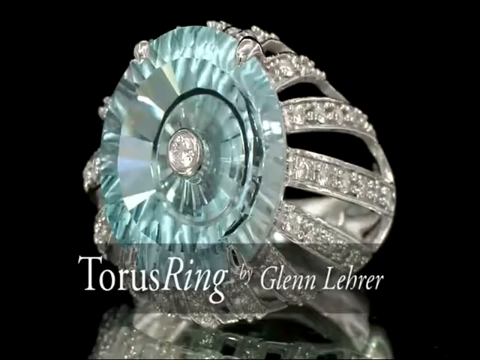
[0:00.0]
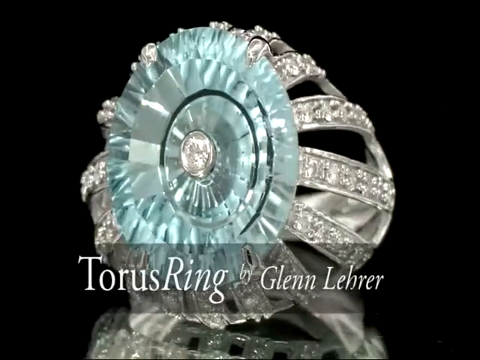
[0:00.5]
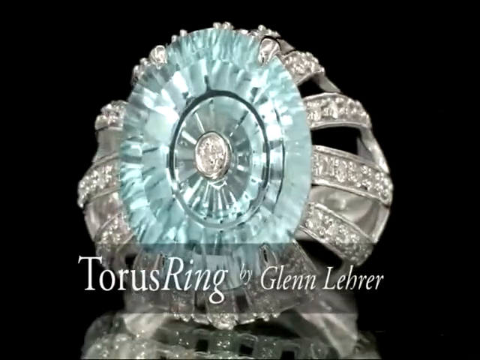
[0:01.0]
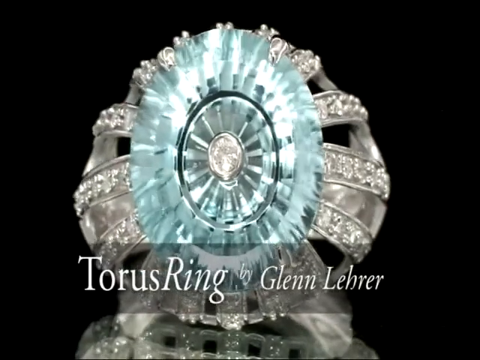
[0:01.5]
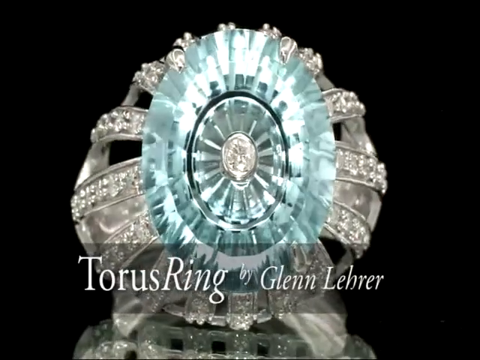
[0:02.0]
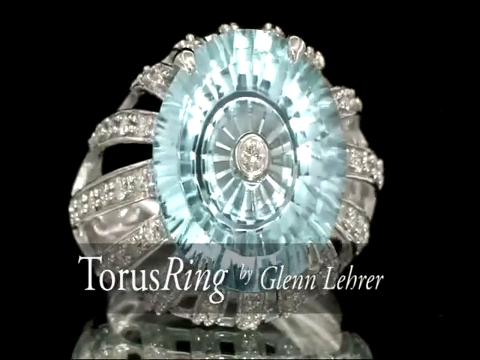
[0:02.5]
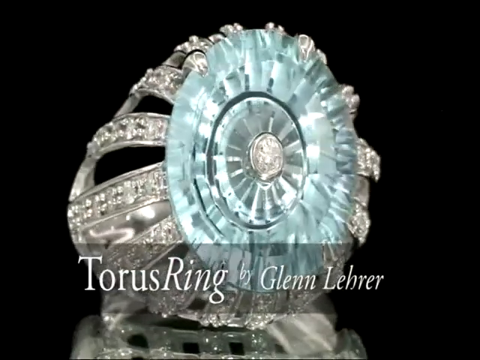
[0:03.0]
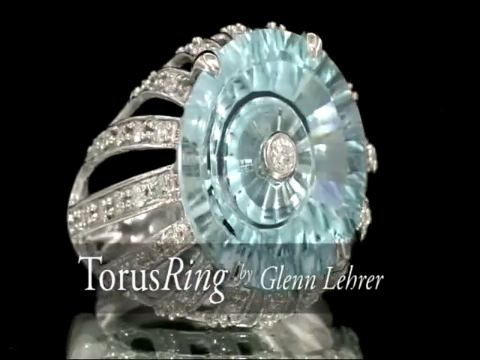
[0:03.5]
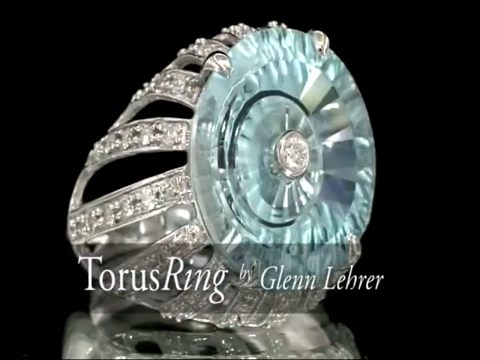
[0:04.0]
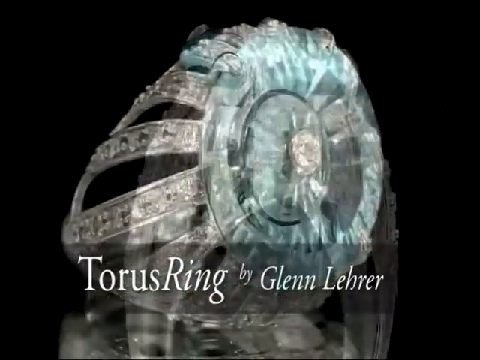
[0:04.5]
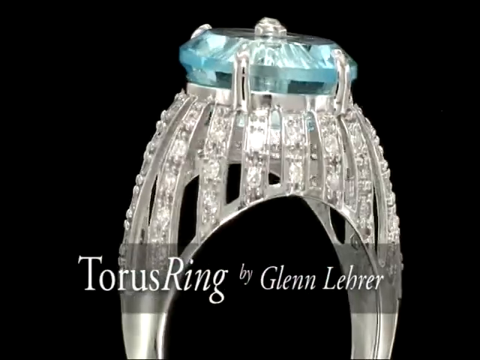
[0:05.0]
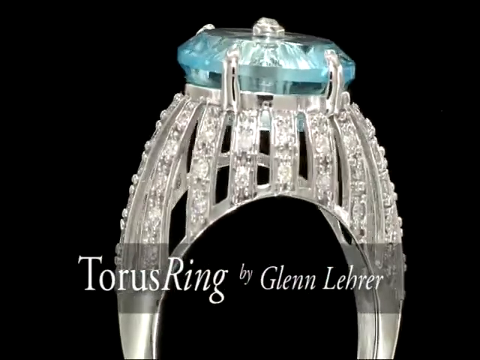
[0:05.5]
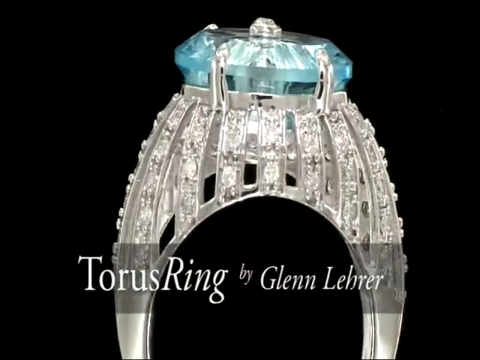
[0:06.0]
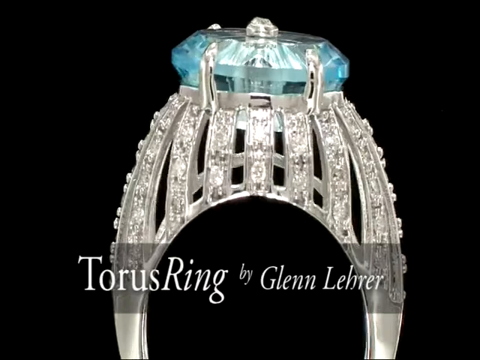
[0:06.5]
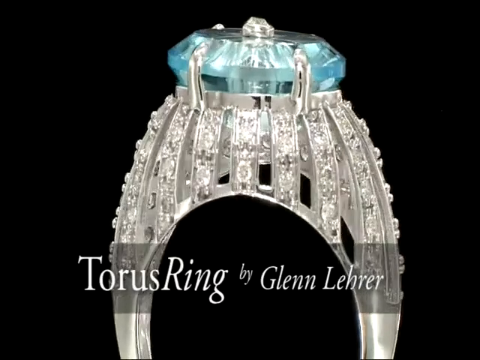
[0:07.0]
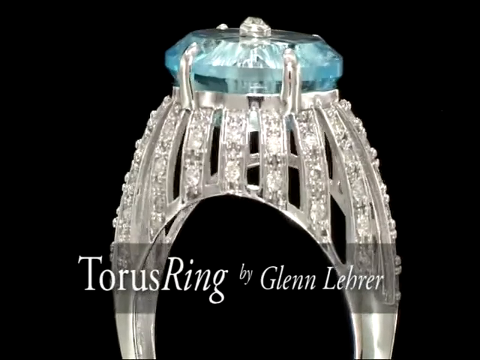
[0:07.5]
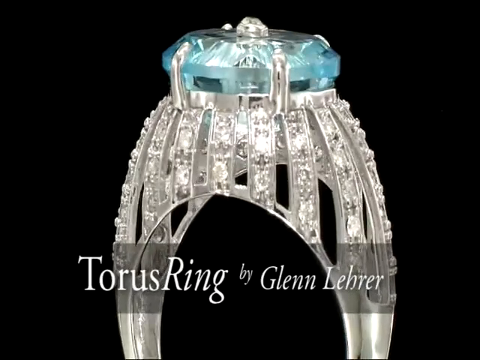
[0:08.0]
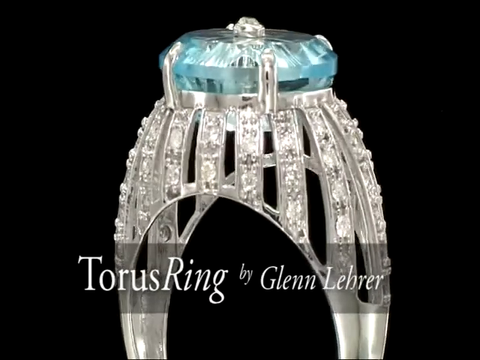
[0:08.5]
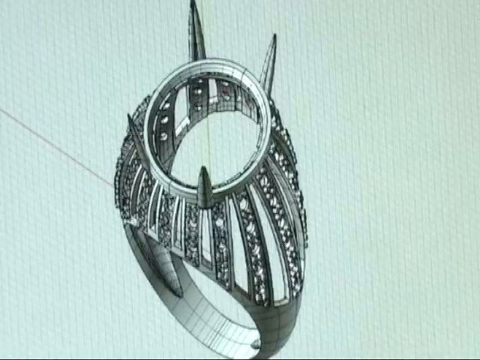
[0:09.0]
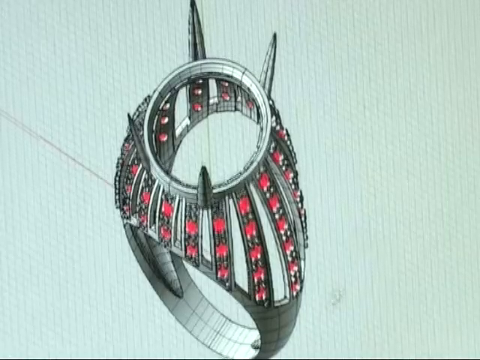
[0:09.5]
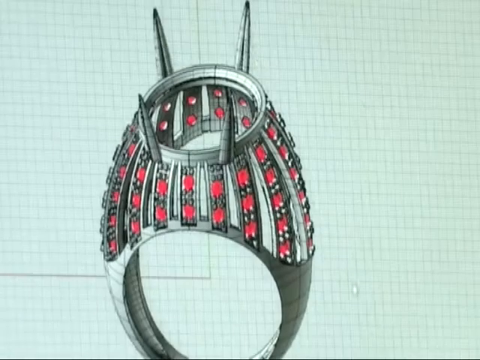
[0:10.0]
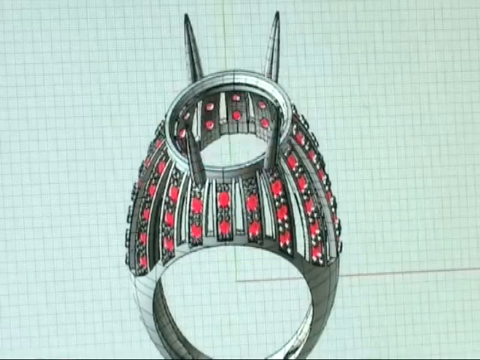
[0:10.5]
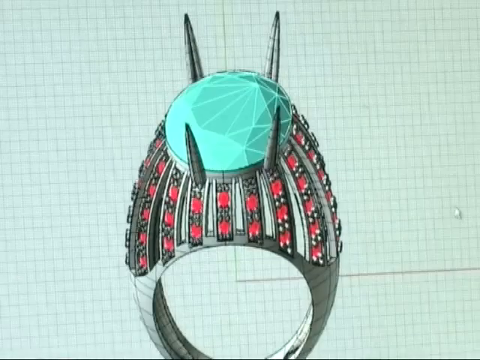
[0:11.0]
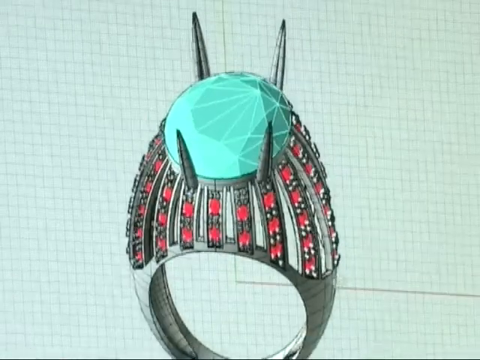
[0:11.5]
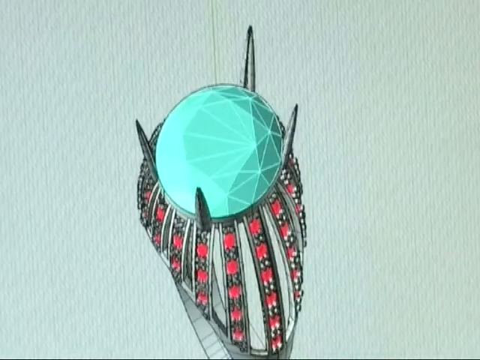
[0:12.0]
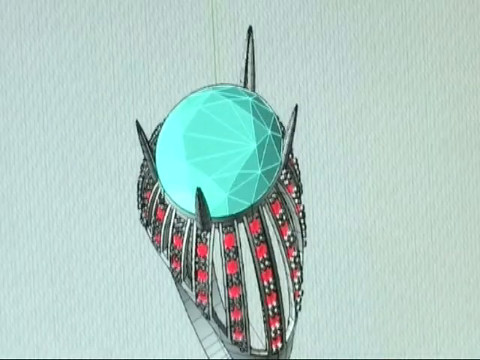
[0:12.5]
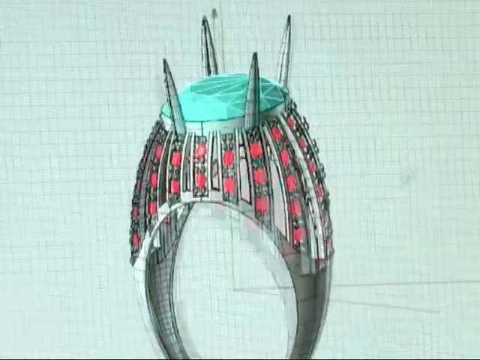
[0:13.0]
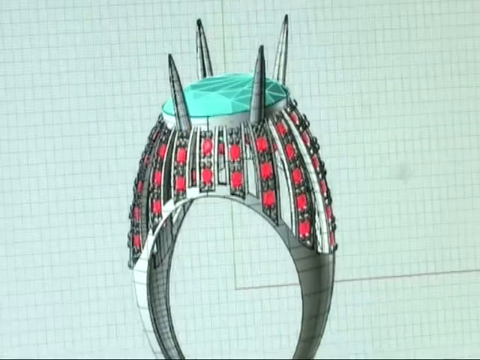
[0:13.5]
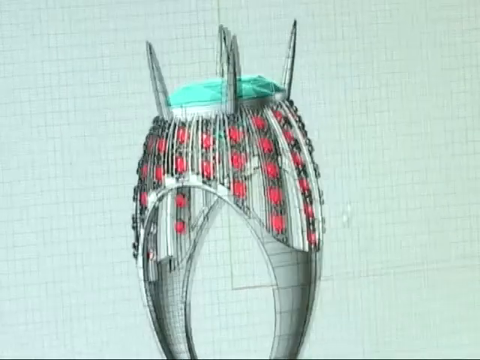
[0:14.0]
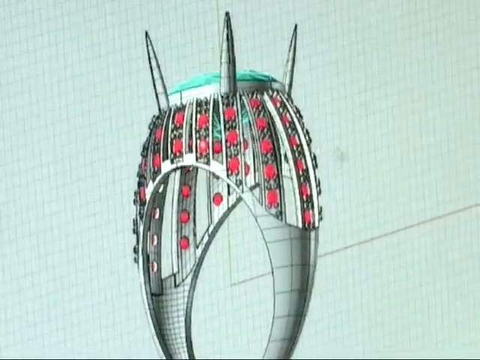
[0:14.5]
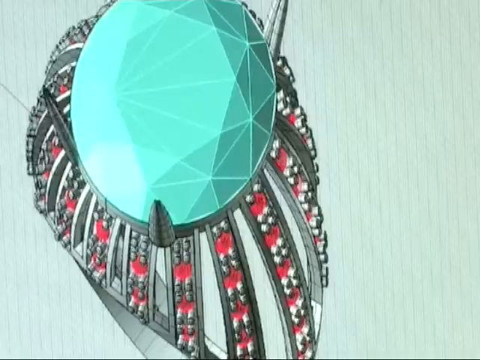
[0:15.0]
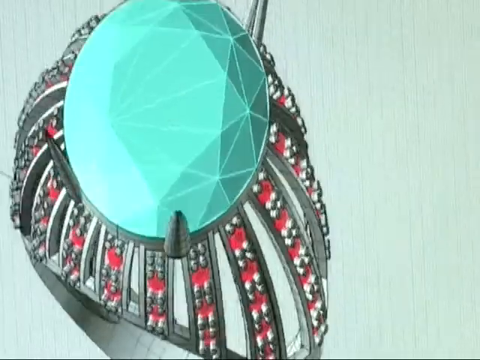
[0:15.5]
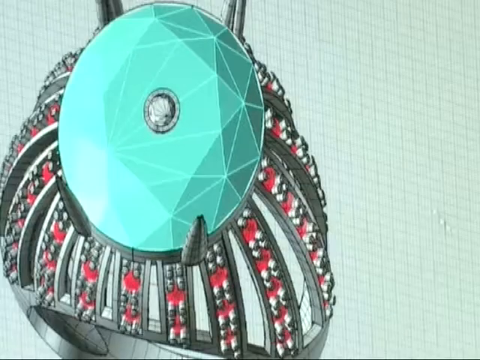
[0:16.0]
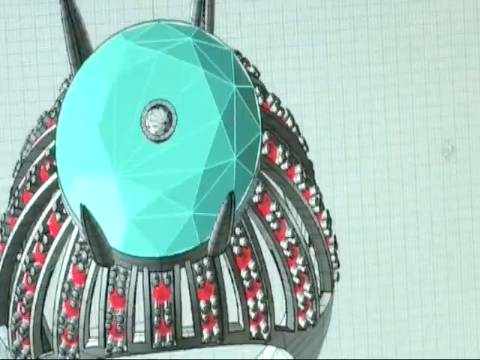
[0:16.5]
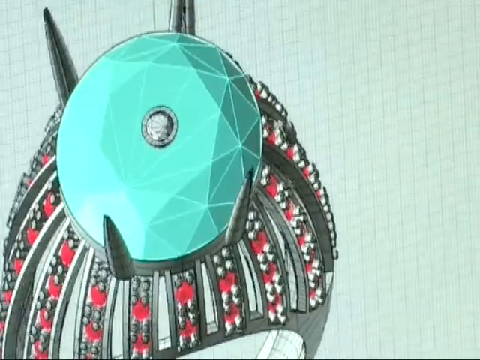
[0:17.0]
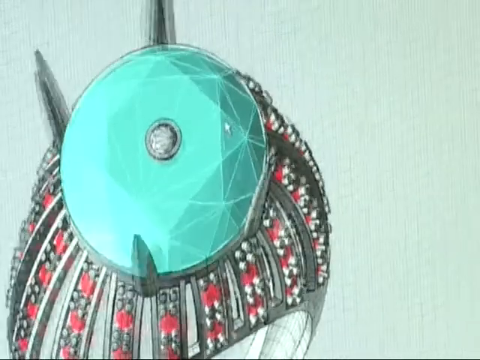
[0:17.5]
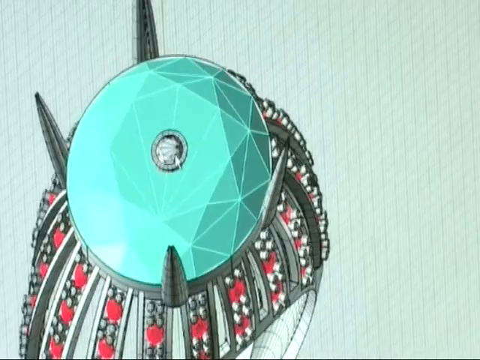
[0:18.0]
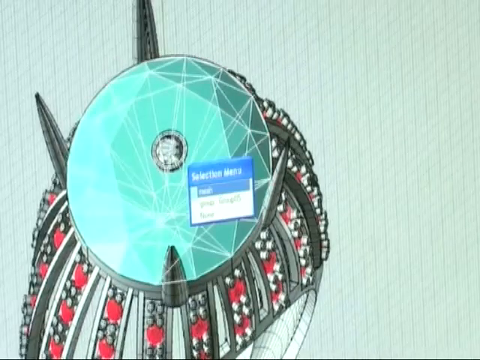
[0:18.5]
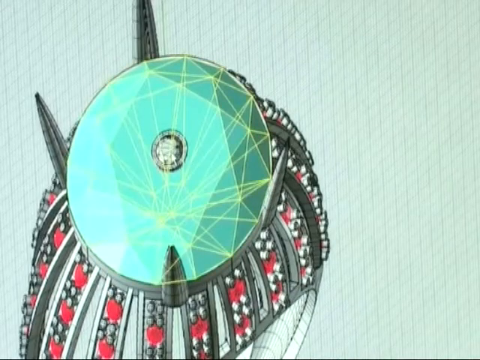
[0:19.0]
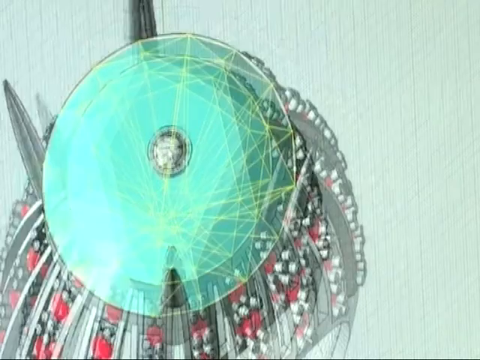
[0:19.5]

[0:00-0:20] The video opens on a black background, and then a ring appears with a heading that says "Taurus ring by Glenn Lira." The ring appears very shiny, and the diamond in the middle looks like a mix of blue and green, giving a light blue colour. There is also a lot of silver in it. It looks like it could suit weddings, engagements or even a promise ring, seems to be aimed at women, and looks as if it is very costly. The ring turns to different angles so more of it can be seen. Next comes some type of design structure showing how the ring was designed and how its make and style came about. No animals are seen.